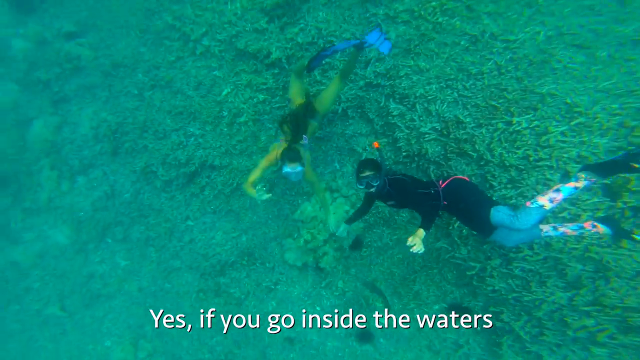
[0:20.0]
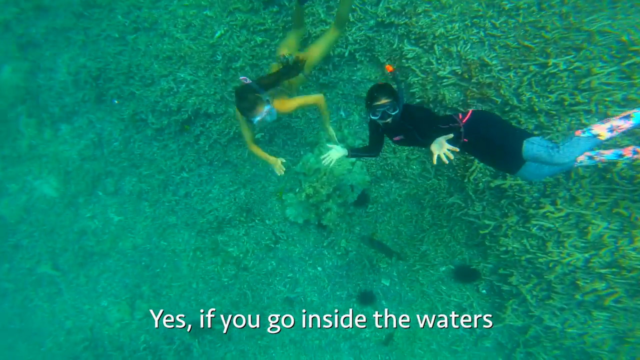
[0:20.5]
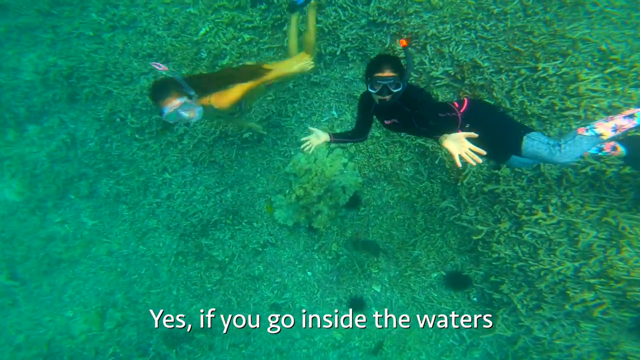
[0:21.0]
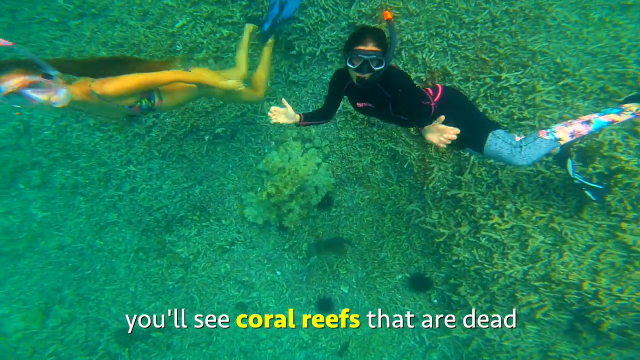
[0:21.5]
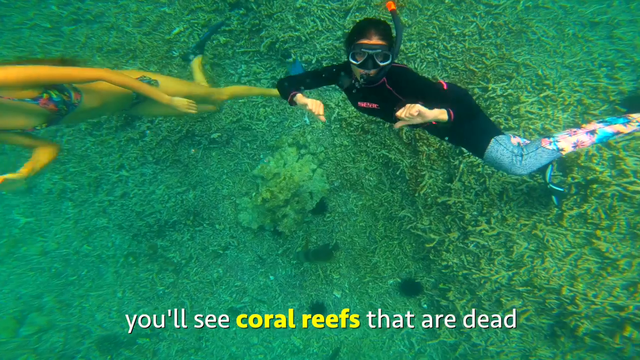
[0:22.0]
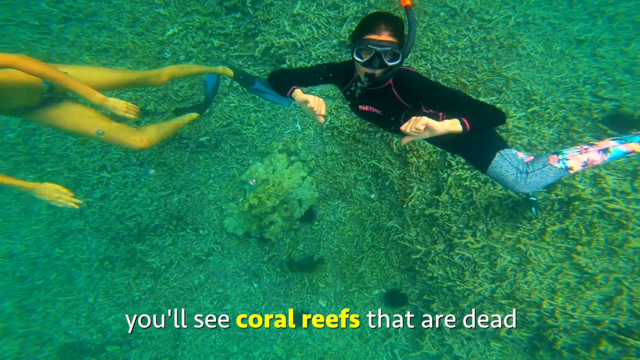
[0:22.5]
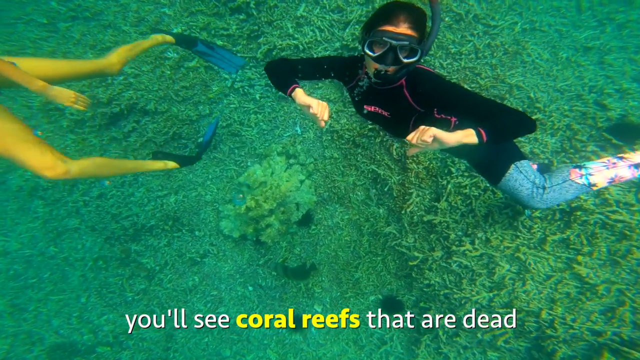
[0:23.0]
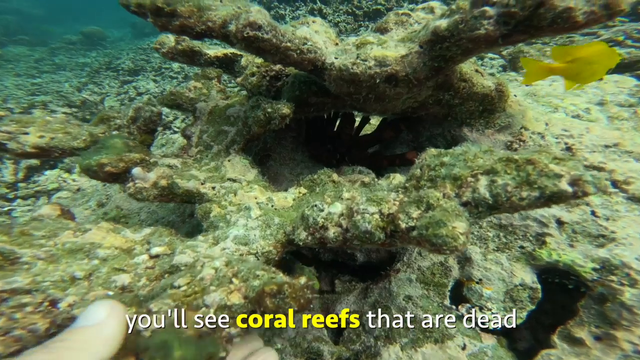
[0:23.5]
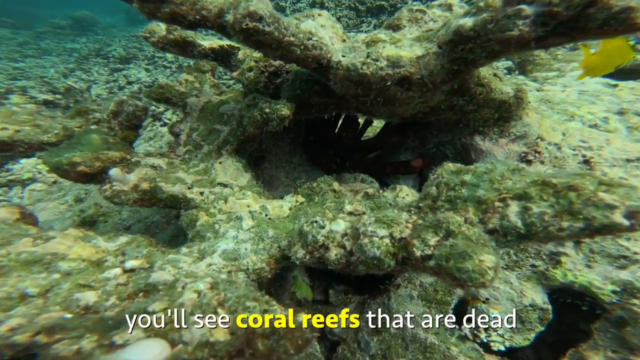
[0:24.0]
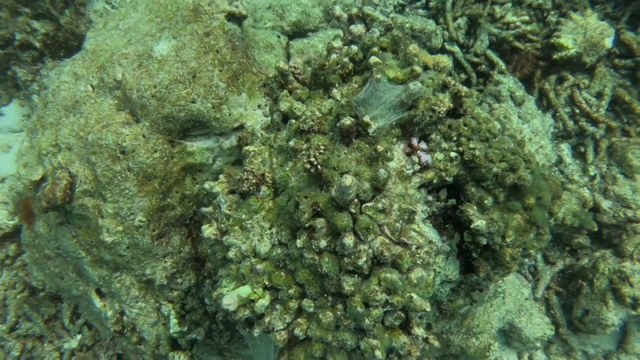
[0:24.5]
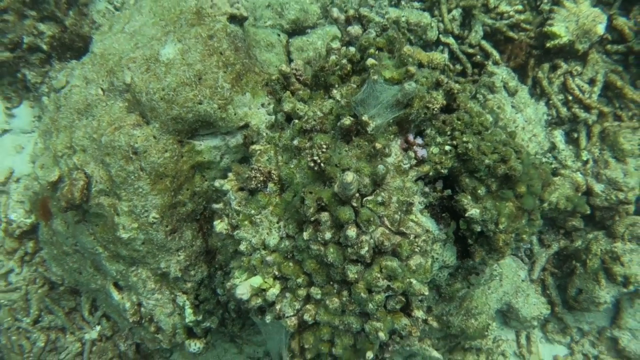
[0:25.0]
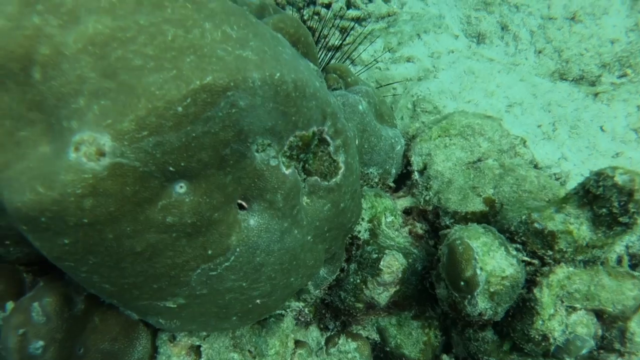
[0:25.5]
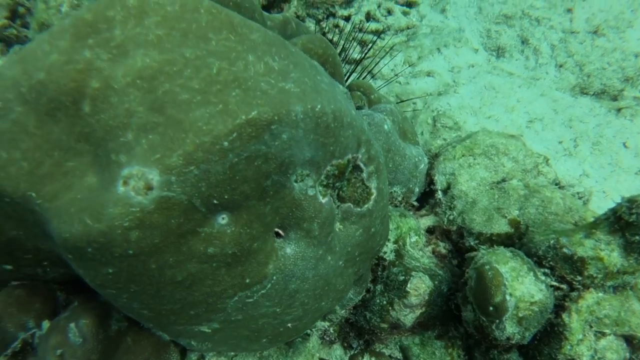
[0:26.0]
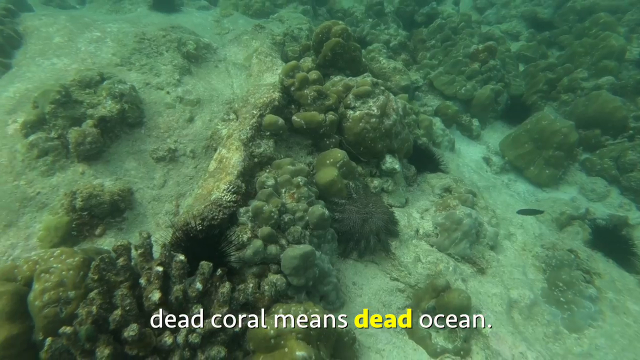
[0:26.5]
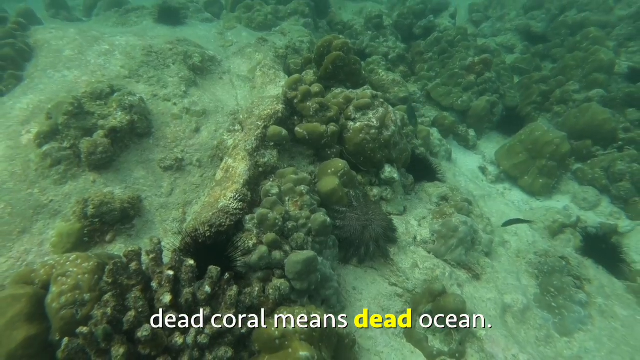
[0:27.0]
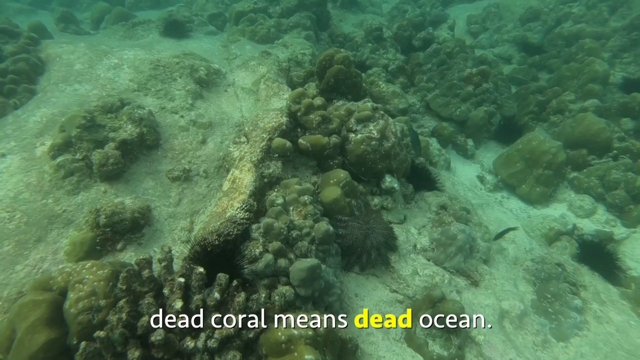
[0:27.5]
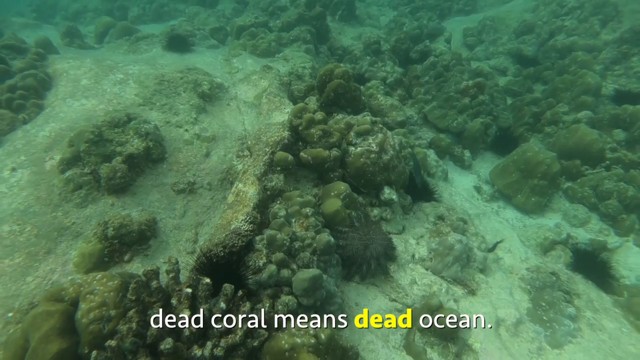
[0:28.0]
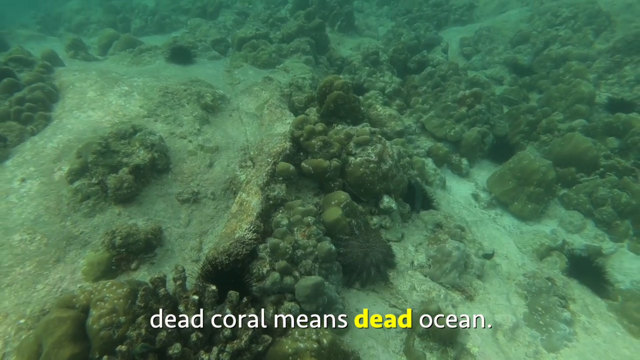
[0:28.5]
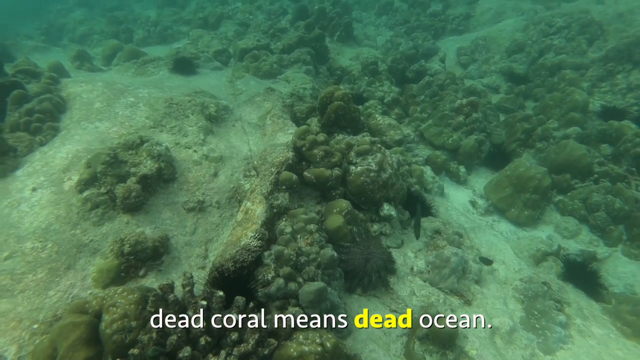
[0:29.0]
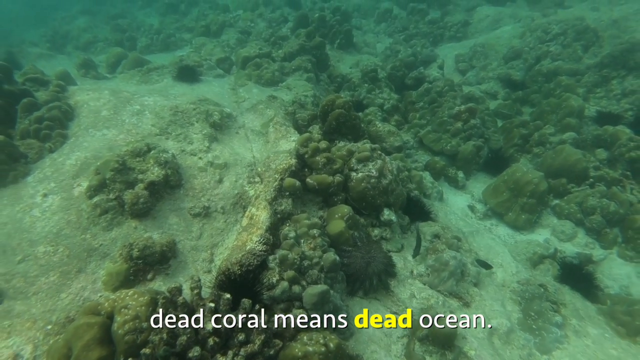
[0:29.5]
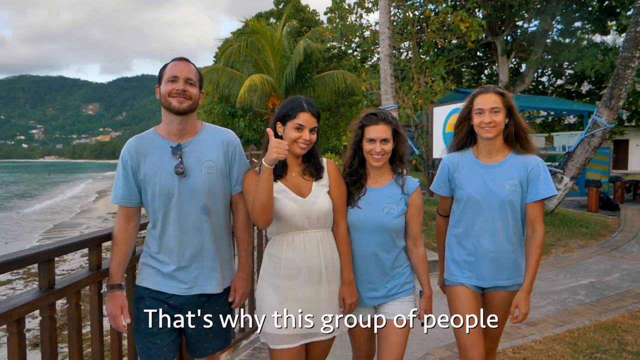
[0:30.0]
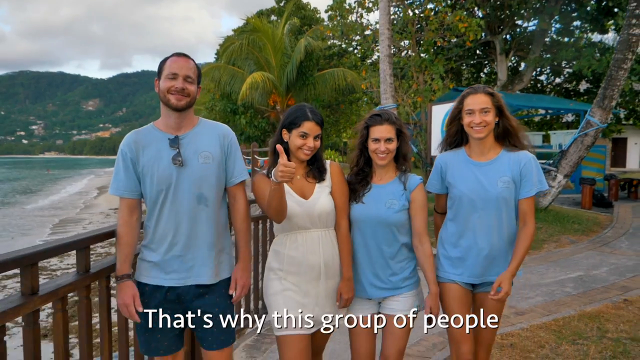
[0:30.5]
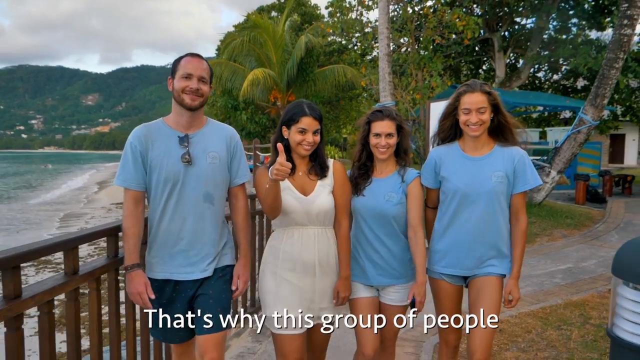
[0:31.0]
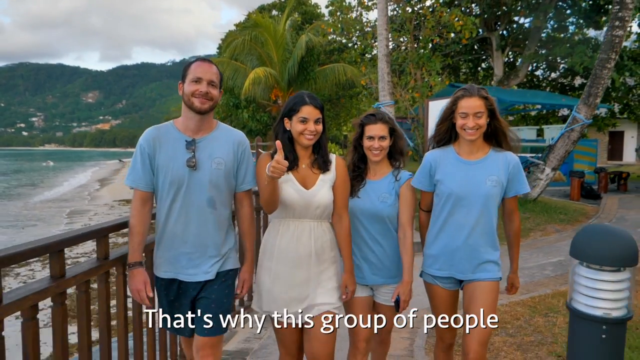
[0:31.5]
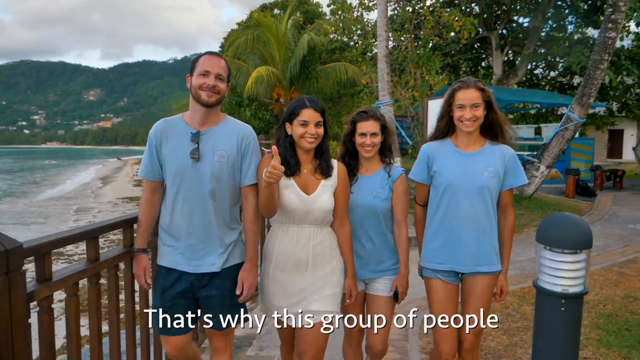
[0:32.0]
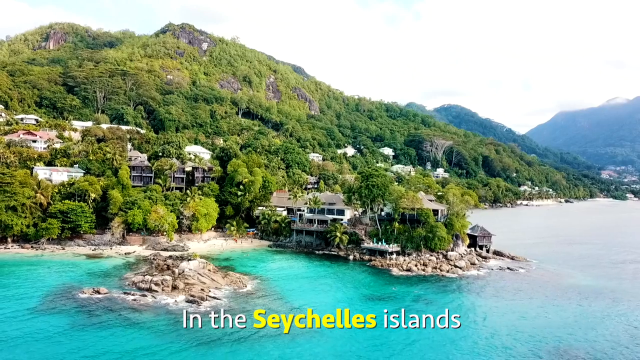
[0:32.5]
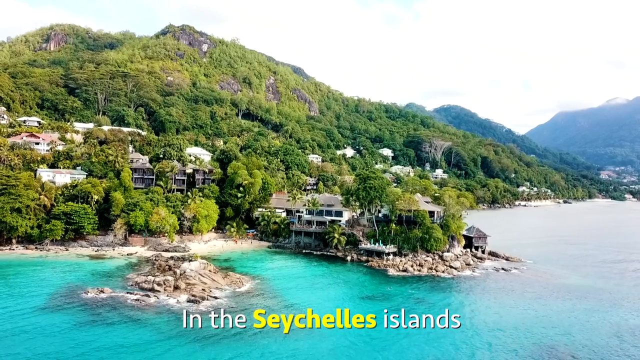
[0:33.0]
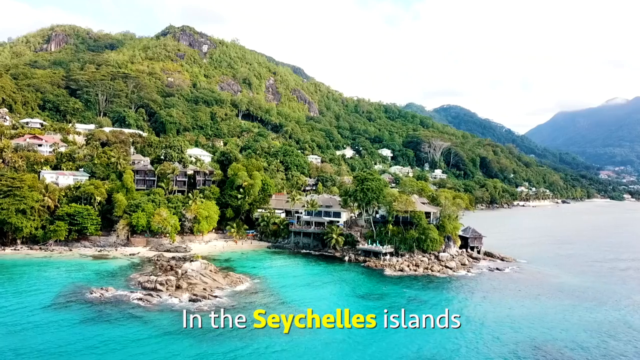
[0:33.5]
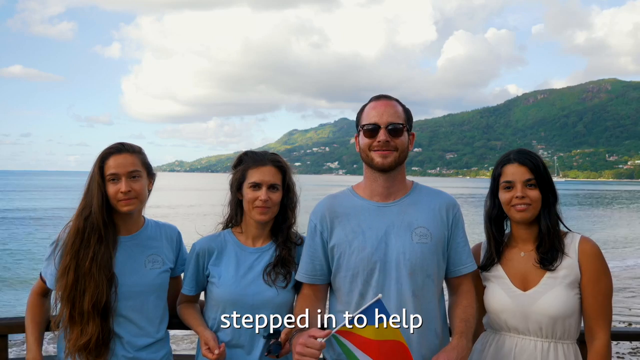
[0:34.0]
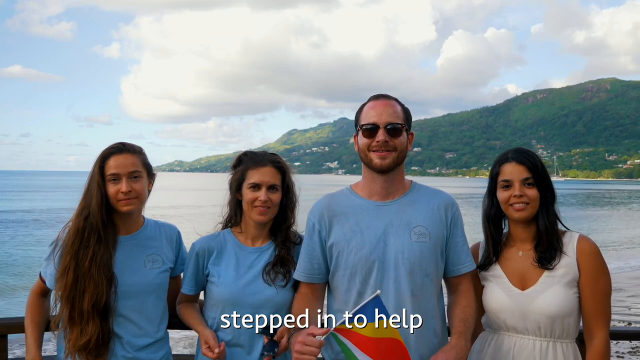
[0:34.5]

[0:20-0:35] Text runs along the bottom of the screen, probably mirroring the voiceover. An above shot shows two people swimming underwater at the coral, and one of them gestures thumbs down. The text reads "if you go inside the waters, you'll see that the coral reefs that are dead", with "coral reefs" in yellow, then "Dead coral means dead ocean", with "dead" in yellow. A group of four people walks together toward the camera in slow motion. Rapid cuts show various scenes of the coral, which looks gray and dead, flat, with no colors standing out. Someone touches the coral, which is brown, discolored and looks almost like stone. The text says this group of people in the Seychelles Island stepped in to help. Most of the shots are underwater, but a couple are above water, showing the people working on it, along with an aerial shot of the island.